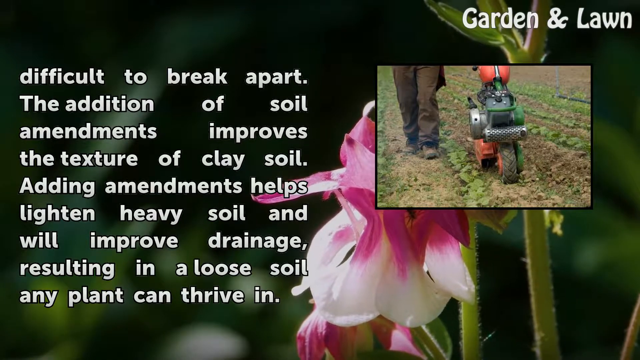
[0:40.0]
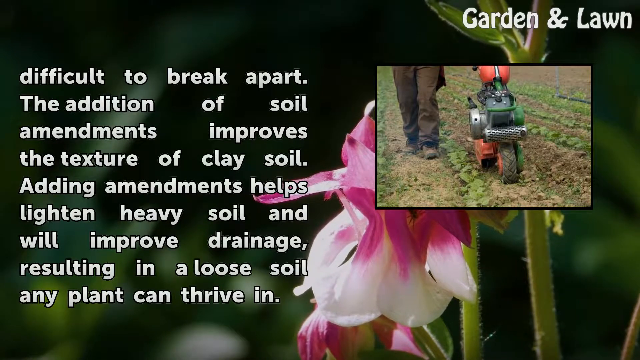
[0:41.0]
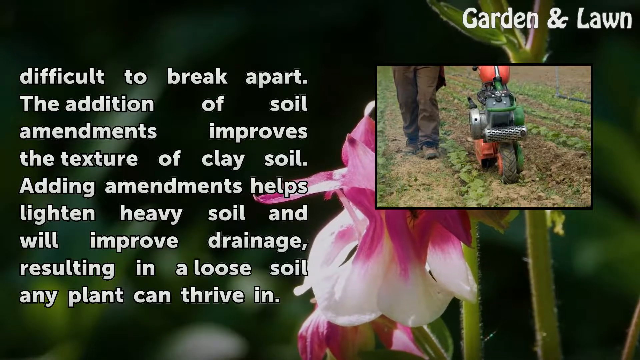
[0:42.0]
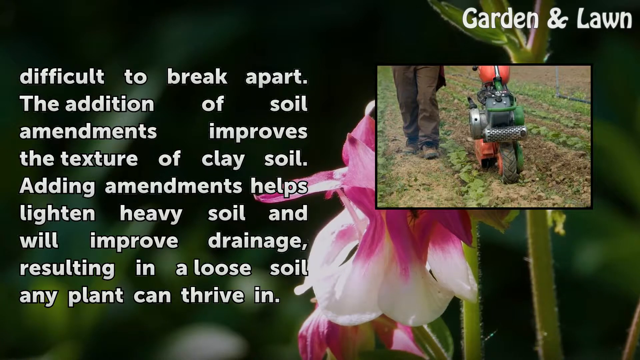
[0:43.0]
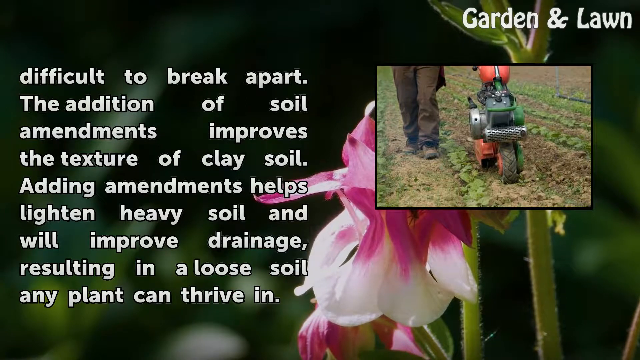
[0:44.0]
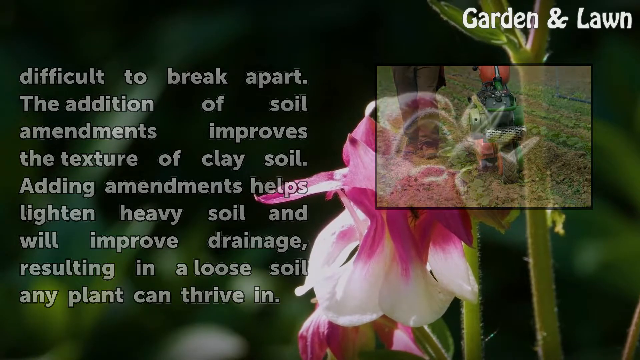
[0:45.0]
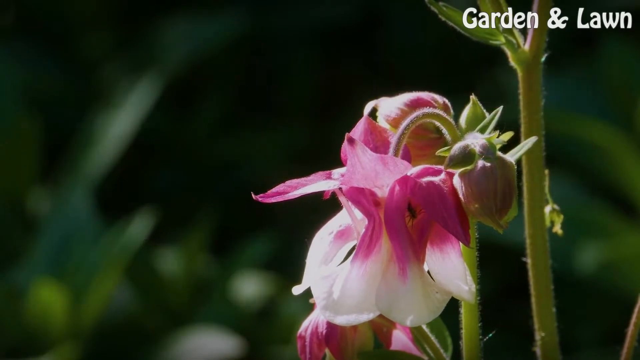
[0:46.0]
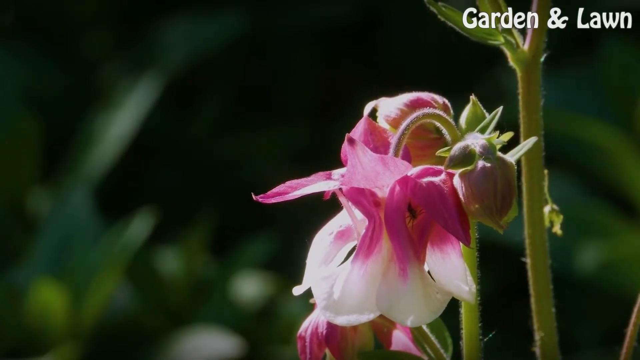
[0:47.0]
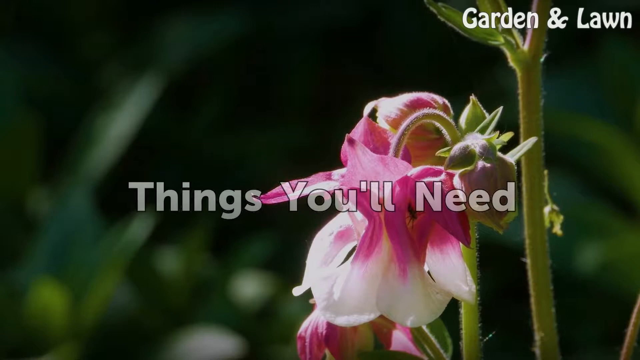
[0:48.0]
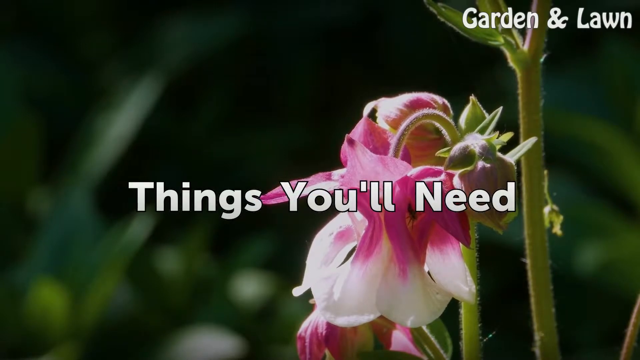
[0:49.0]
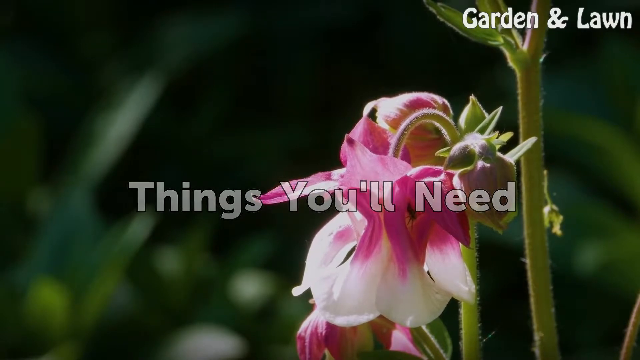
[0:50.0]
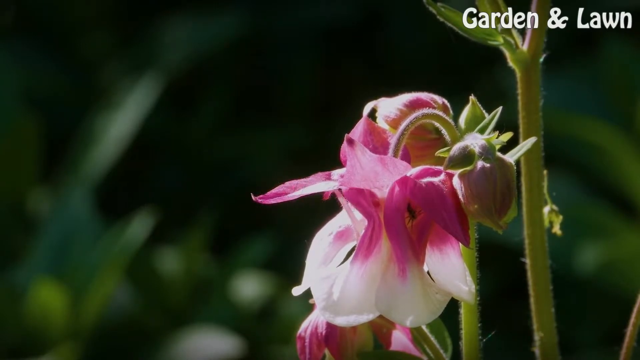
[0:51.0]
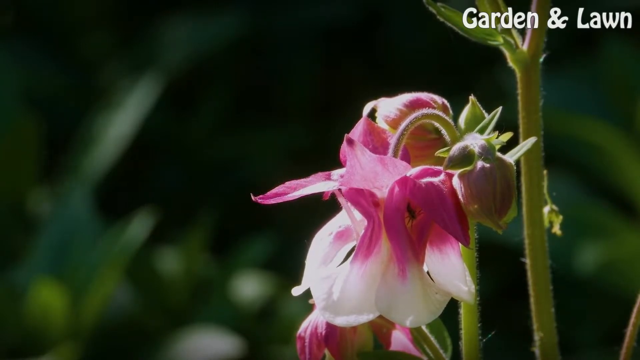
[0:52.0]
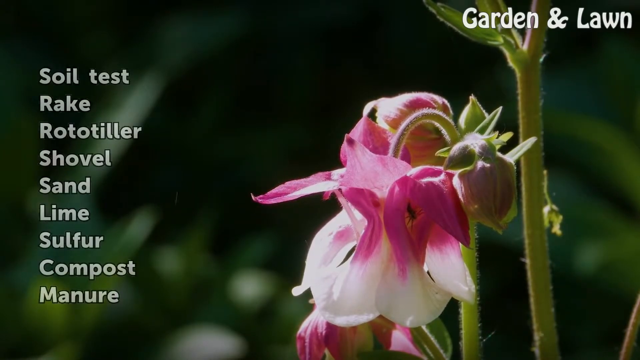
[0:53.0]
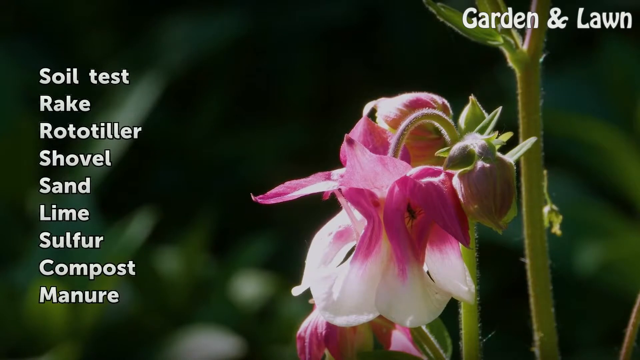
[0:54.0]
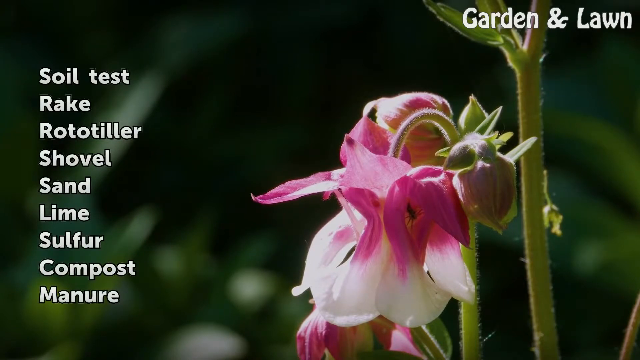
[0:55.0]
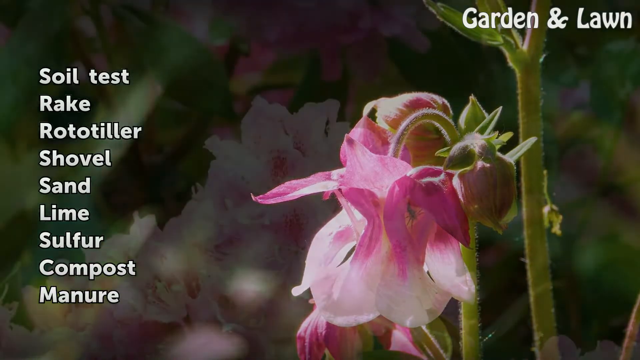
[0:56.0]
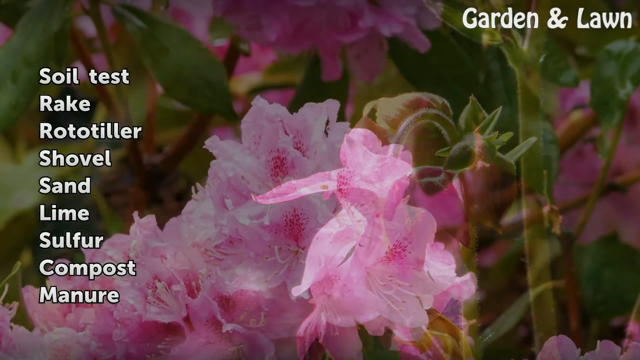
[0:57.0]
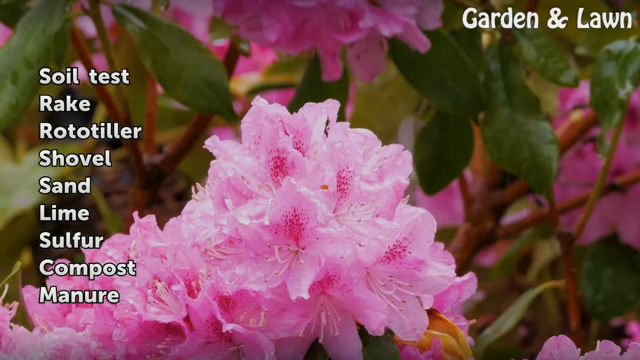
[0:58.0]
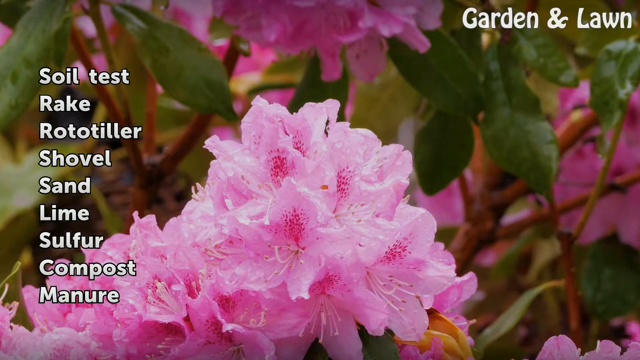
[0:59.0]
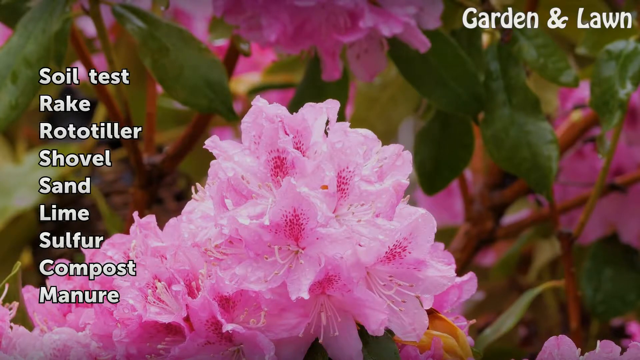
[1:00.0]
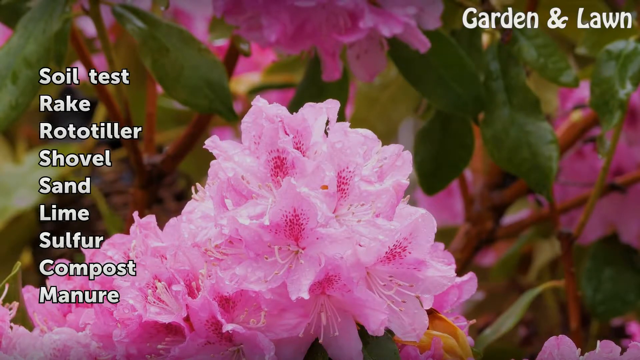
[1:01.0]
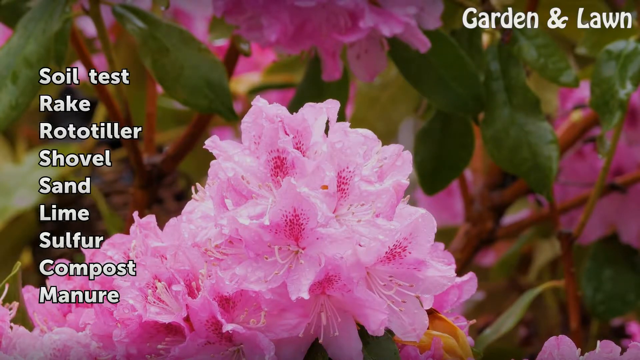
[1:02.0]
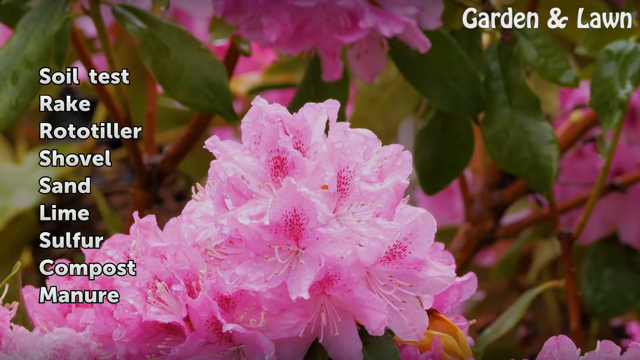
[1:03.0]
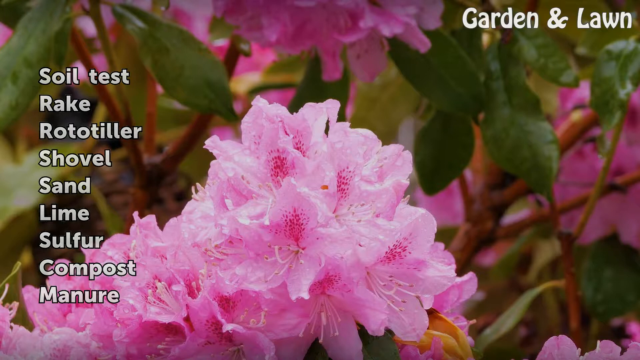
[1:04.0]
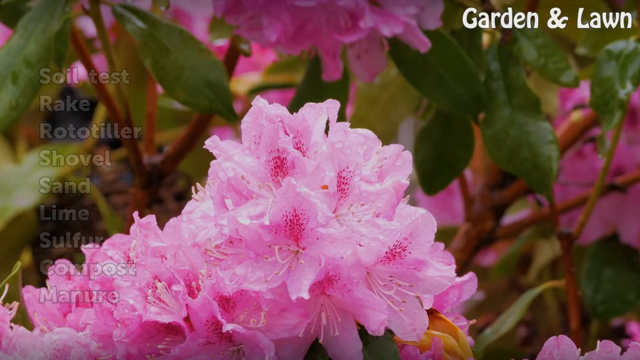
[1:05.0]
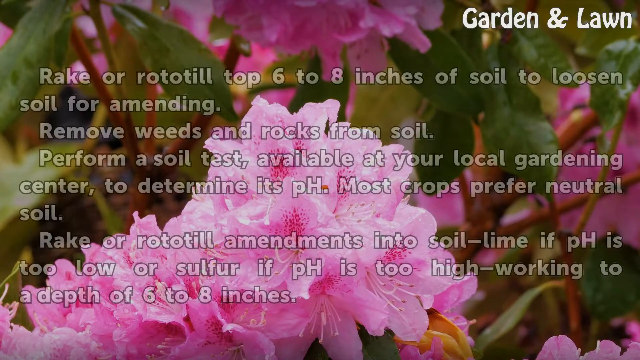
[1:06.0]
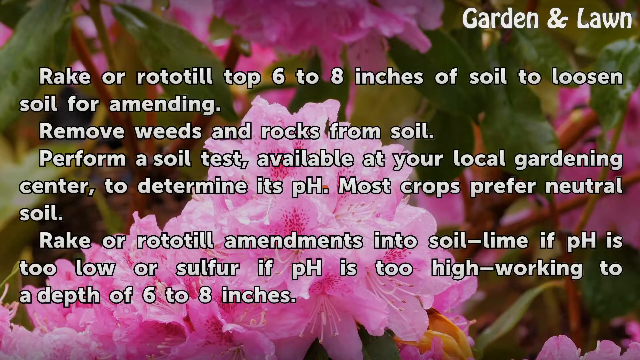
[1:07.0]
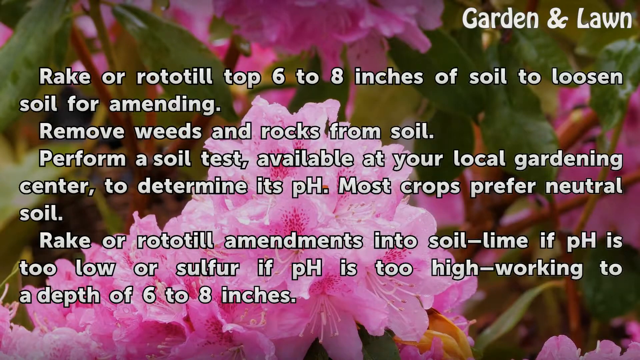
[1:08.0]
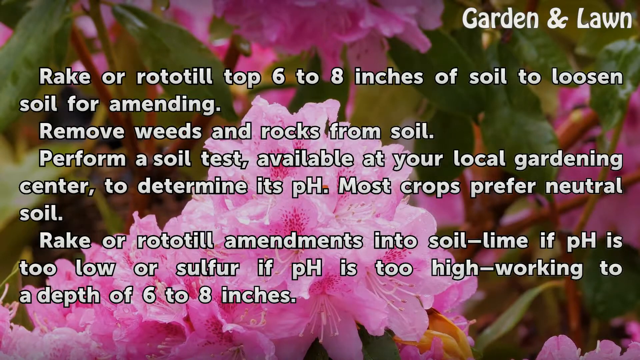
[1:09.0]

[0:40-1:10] The lily-type flower continues gently blowing from left to right, with text on the left-hand side giving information about making clay soil able to let plants thrive. This text fades from view and new text appears in the centre of the screen: "things you'll need". New white text then fades in on the left-hand side as a list: "soil test, rake, rototiller, shovel, sand, lime, sulfur, compost and manure". While the list is on screen, the backdrop changes to a still photograph of a bushy plant with a couple of stems, green leaves and lots of pink, reddish, rosy petals, seemingly many little flowers bunched together to form one mass of flower heads. The list then fades from view and instructions on putting the amendments into the soil fade in.